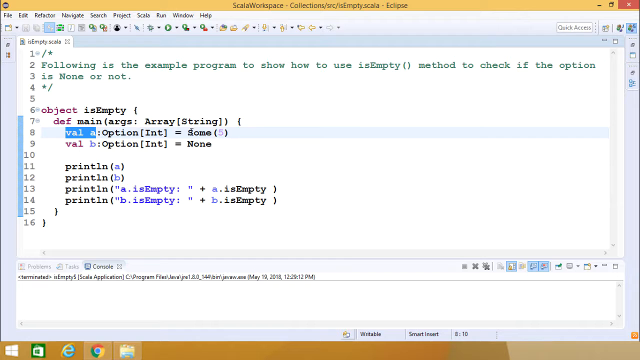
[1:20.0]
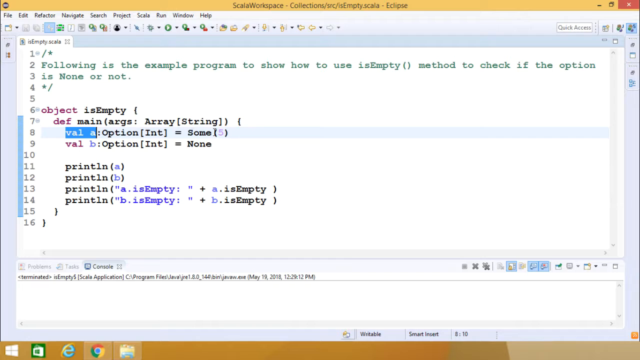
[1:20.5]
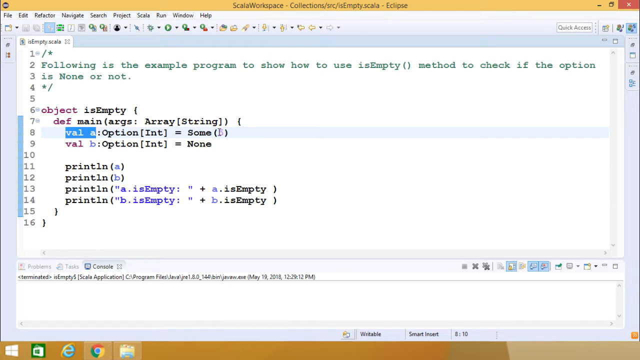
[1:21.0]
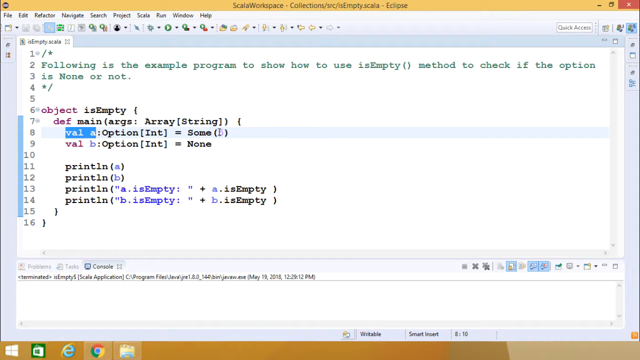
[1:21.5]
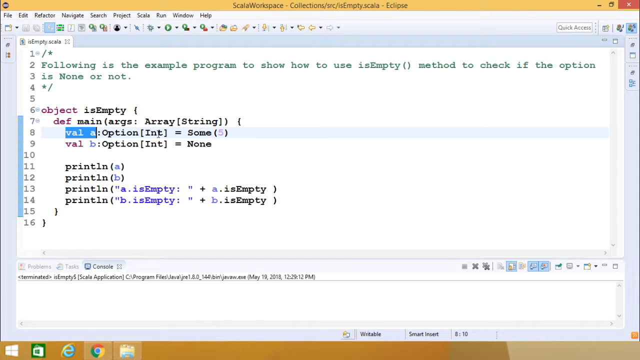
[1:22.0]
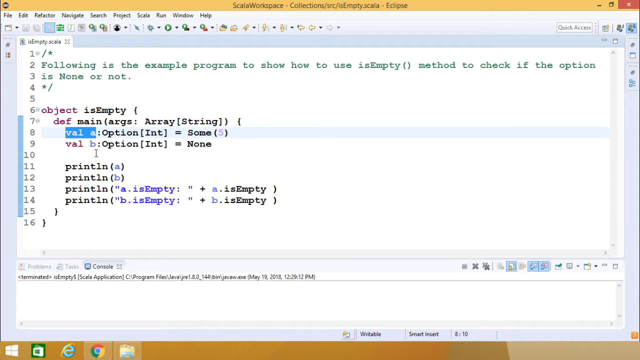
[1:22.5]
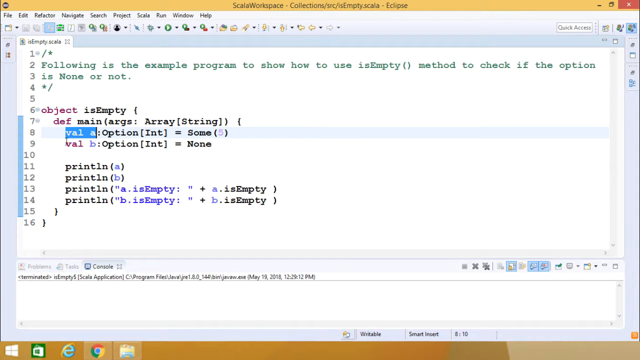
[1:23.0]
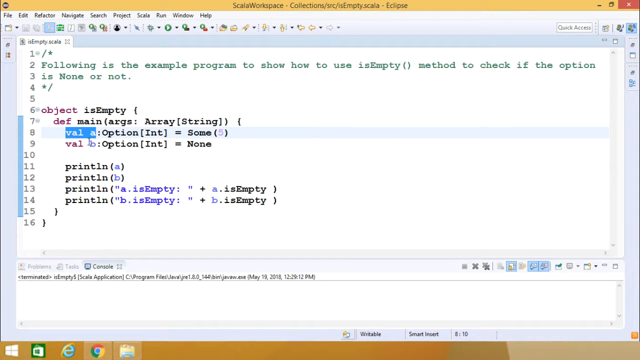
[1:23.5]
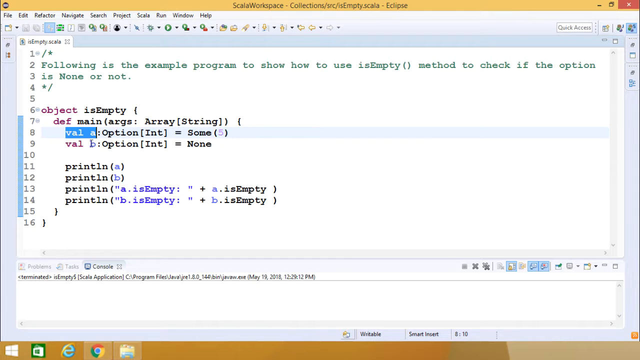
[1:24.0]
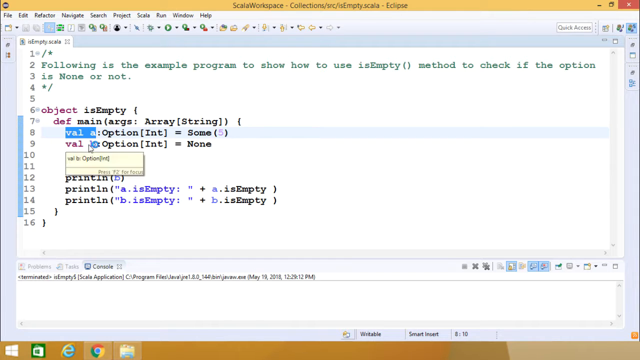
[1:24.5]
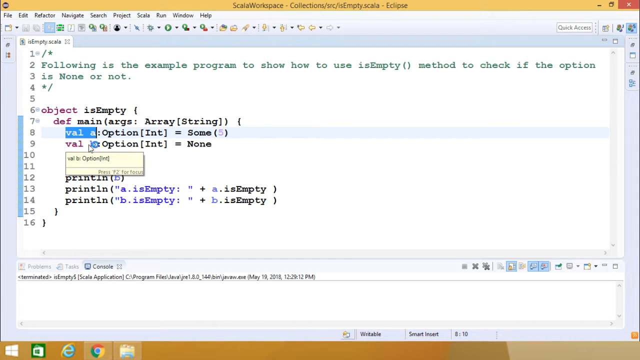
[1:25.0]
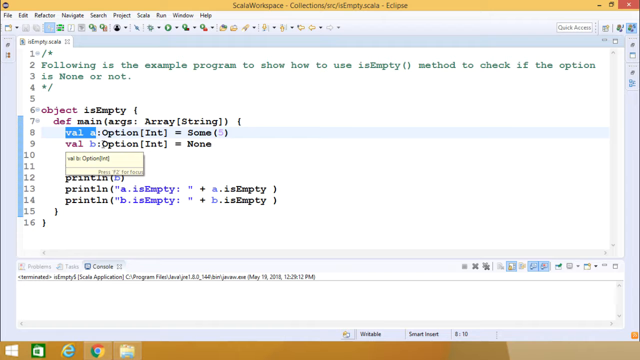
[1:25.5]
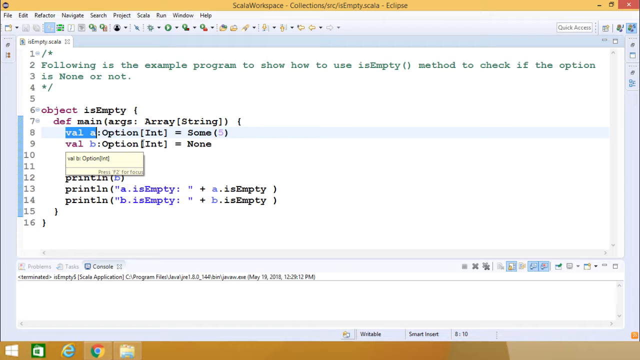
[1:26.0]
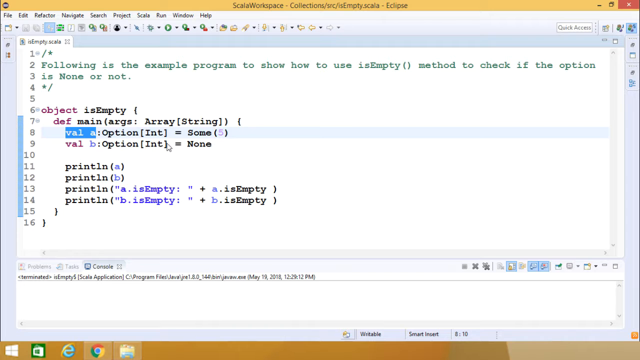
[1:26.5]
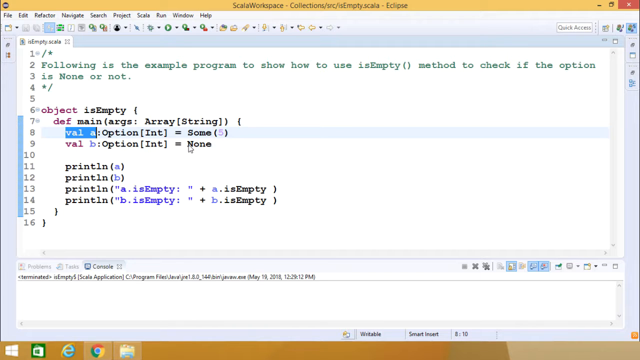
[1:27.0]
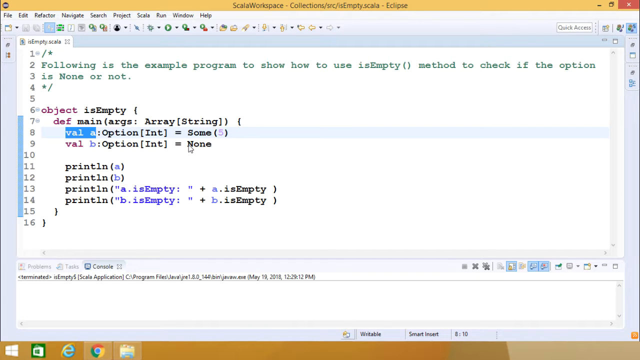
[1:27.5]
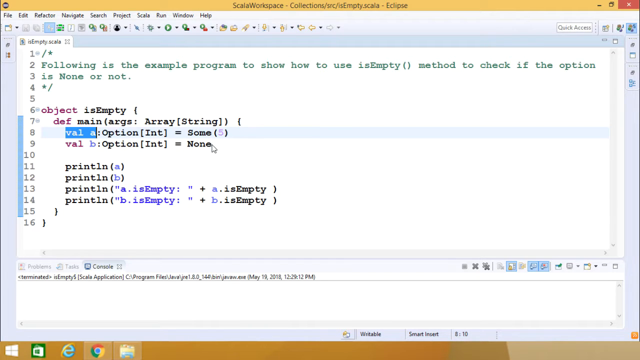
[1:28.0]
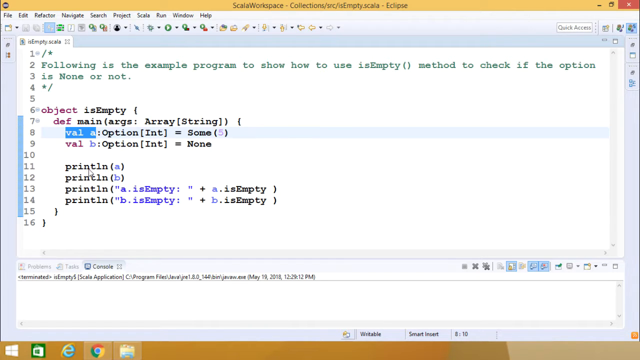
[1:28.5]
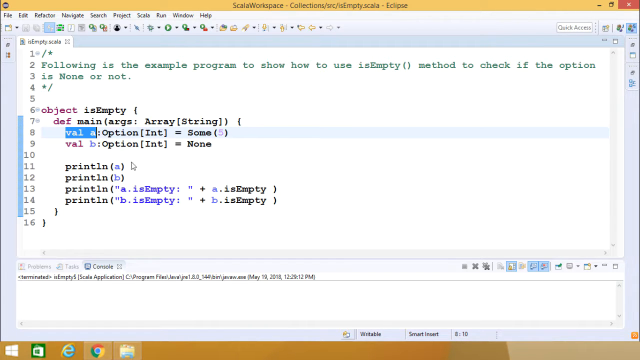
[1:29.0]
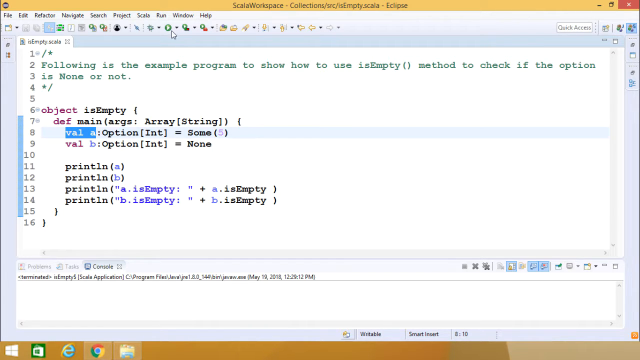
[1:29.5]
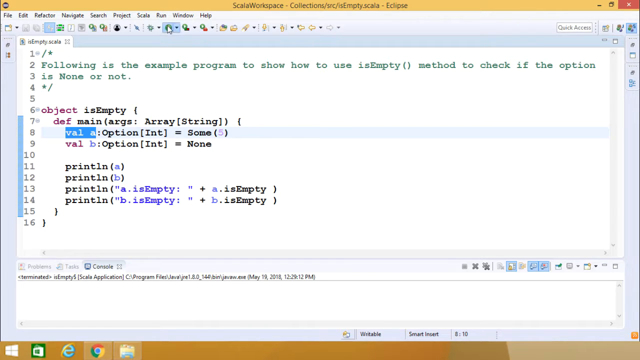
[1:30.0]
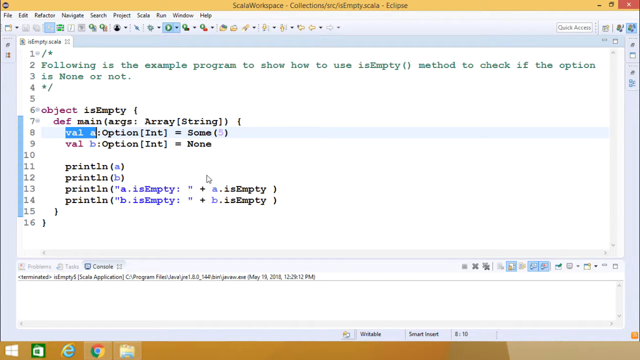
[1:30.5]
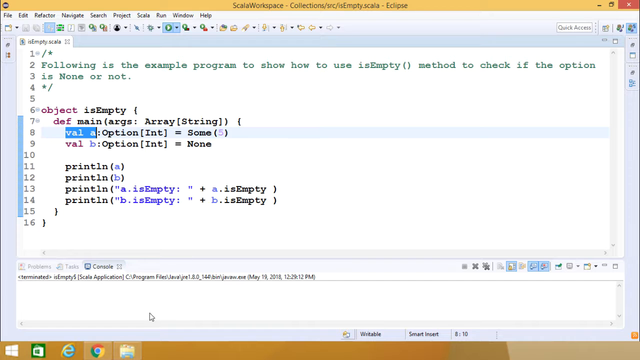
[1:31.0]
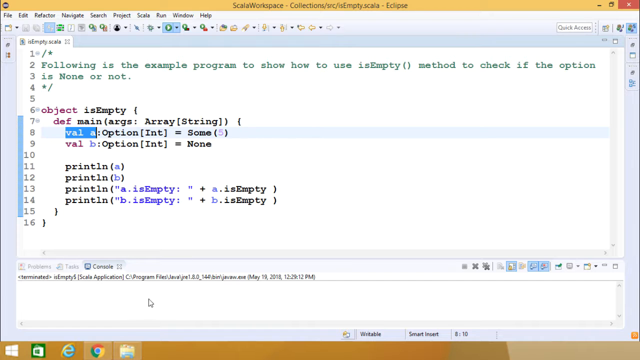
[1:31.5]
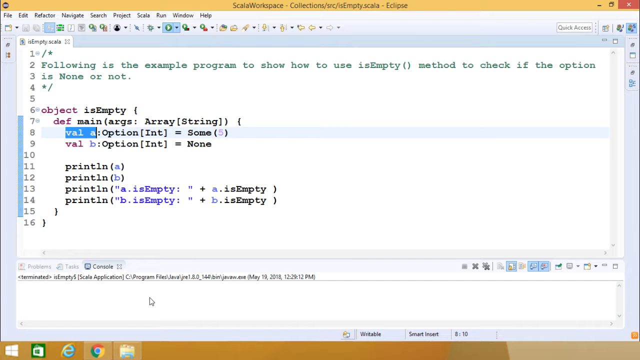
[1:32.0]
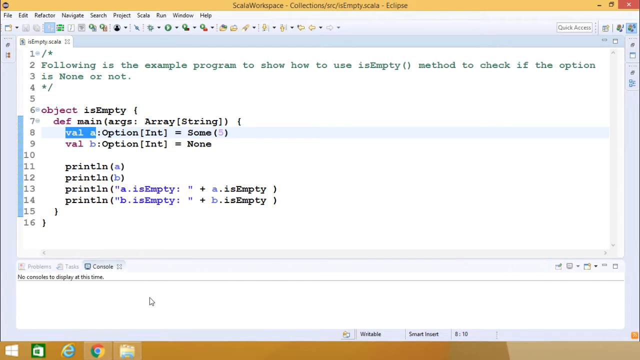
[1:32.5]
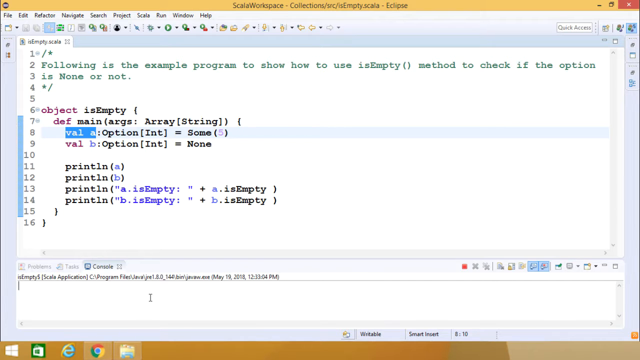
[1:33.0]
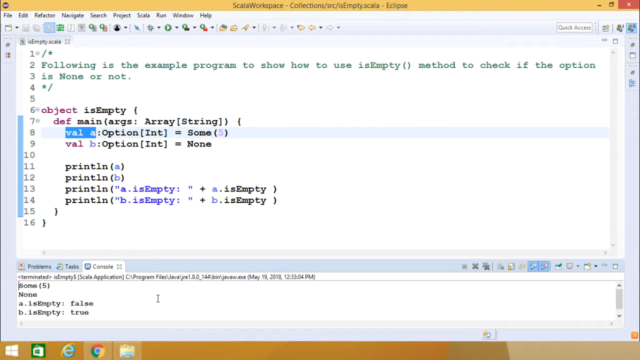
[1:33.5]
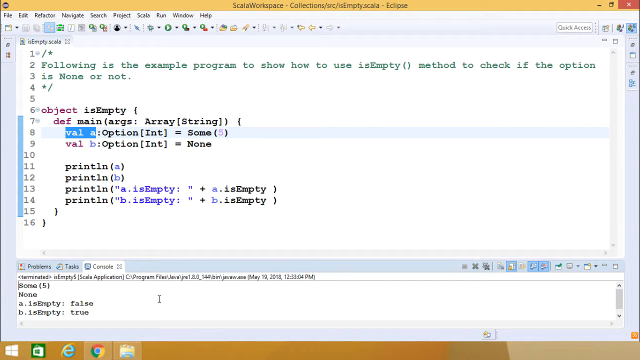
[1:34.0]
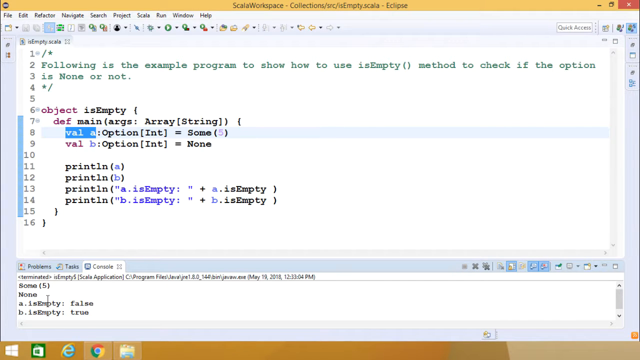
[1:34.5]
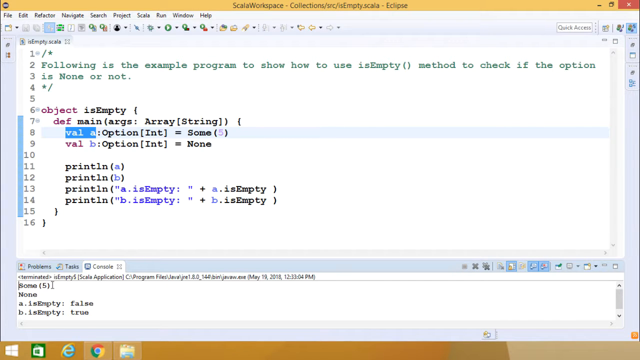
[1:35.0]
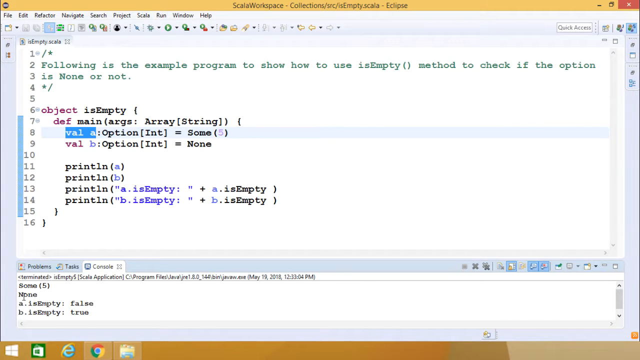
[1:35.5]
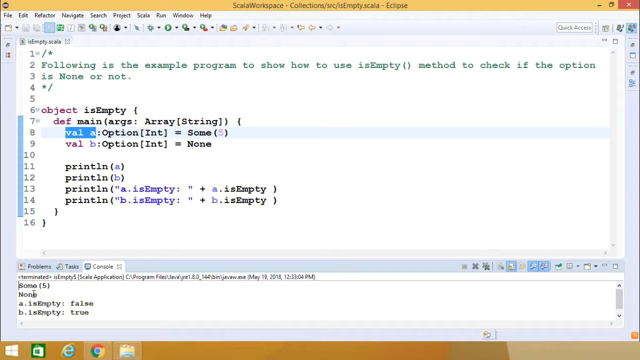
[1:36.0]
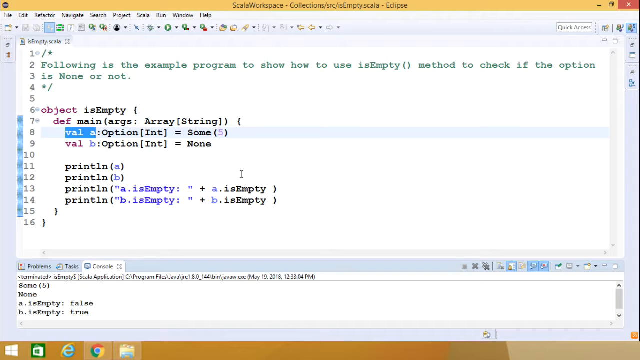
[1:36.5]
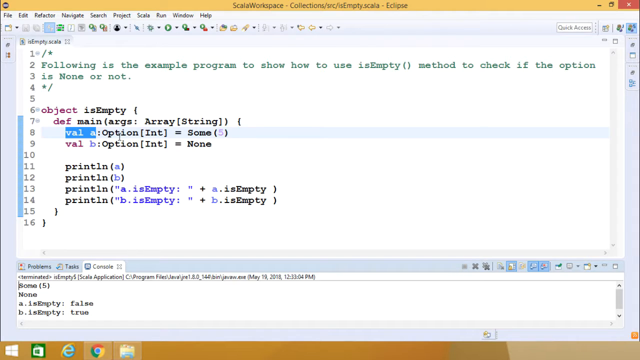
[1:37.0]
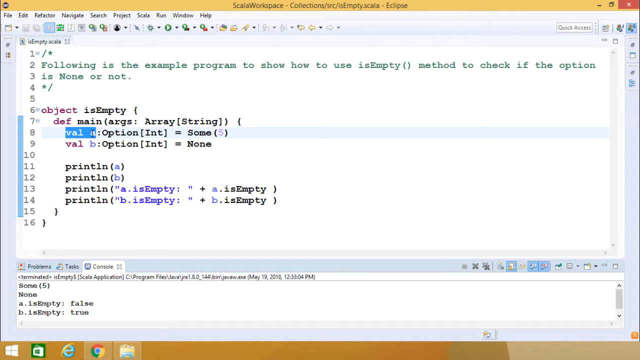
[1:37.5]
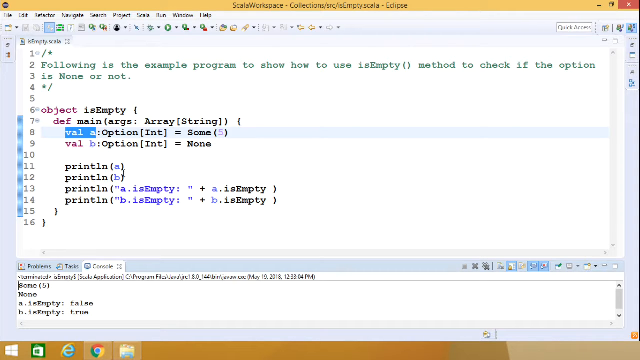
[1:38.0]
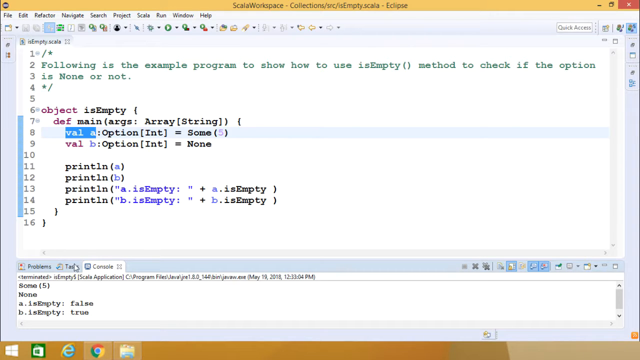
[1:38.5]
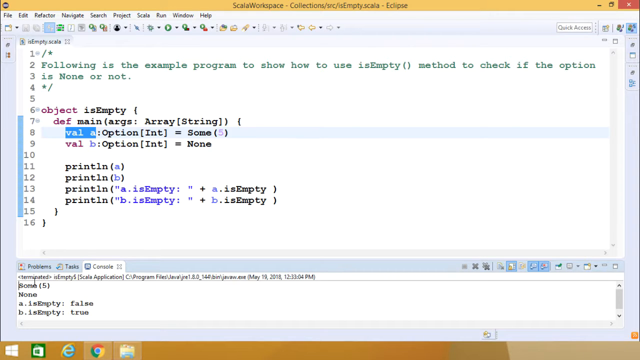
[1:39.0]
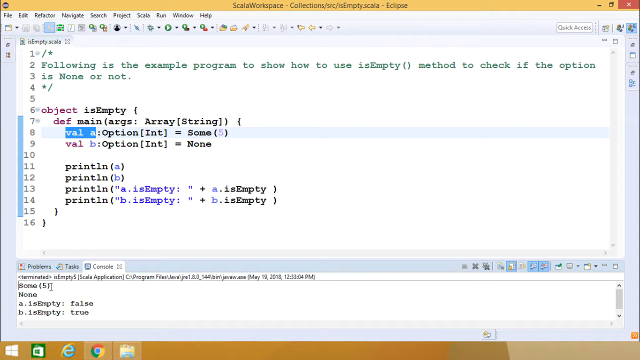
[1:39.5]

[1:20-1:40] The tutorial shows the Scala Workplace software open, a text editor for creating code. The code is open in one of the editor's tabs and runs from line 1 to line 16. Line 1 is a forward slash and an asterisk, and lines 2 and 3 hold the sentence "Following is the example program to show how to use empty method to check if the option is none or not". Line 4 is an asterisk with a forward slash, line 5 is empty, and the code begins on line 6 with "object is empty". On line 8, the person has highlighted the text "val a". Line 10 is empty, lines 11 through 14 begin with the word "print", and lines 15 and 16 each have just one marking. At the bottom, a console tab is open, probably for running the code.